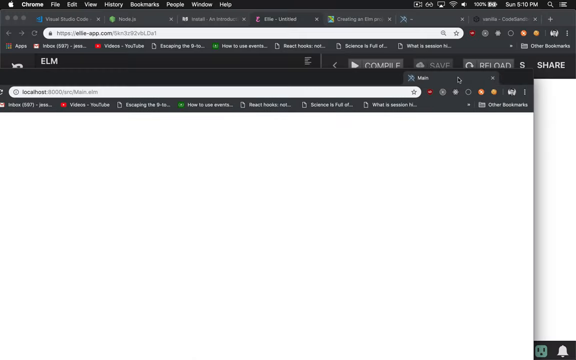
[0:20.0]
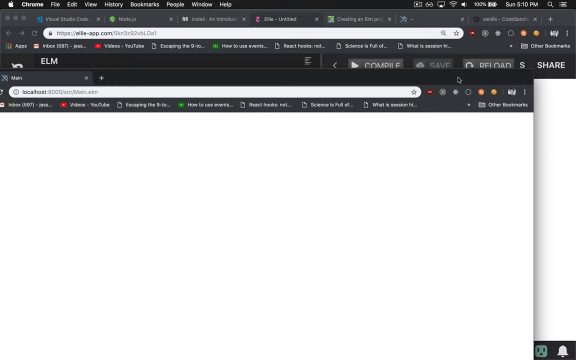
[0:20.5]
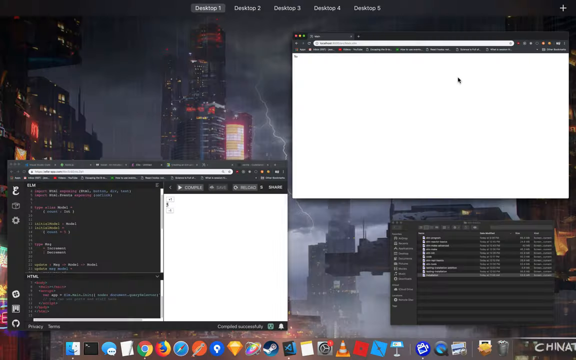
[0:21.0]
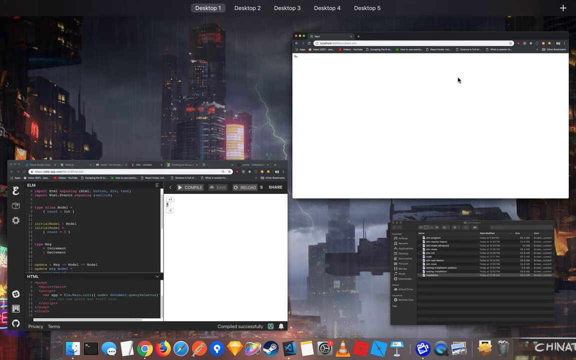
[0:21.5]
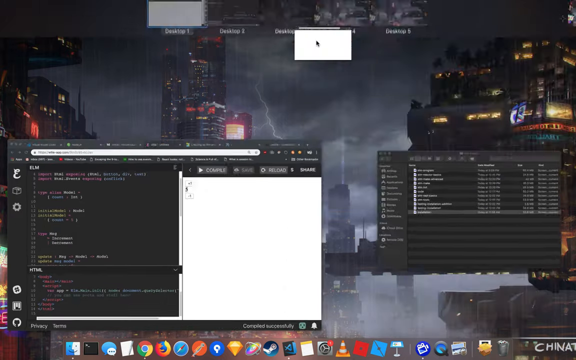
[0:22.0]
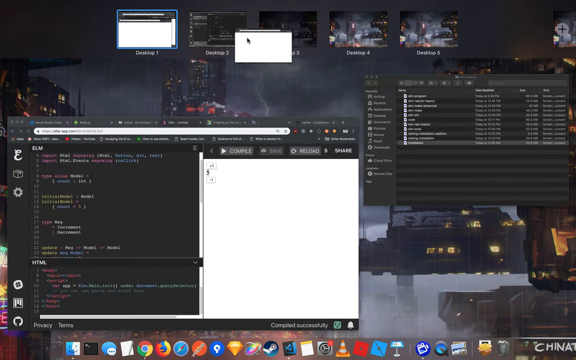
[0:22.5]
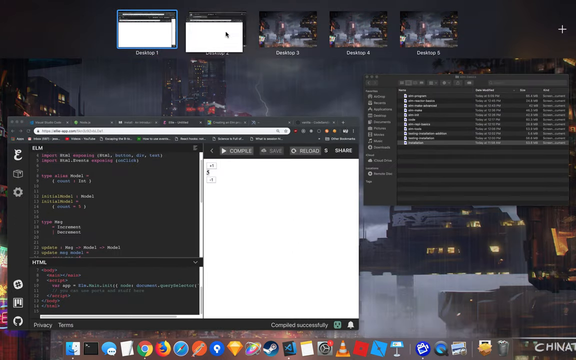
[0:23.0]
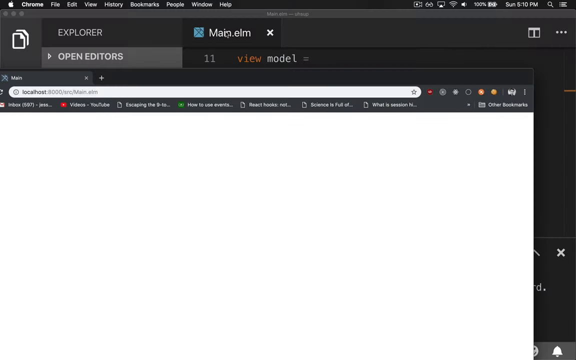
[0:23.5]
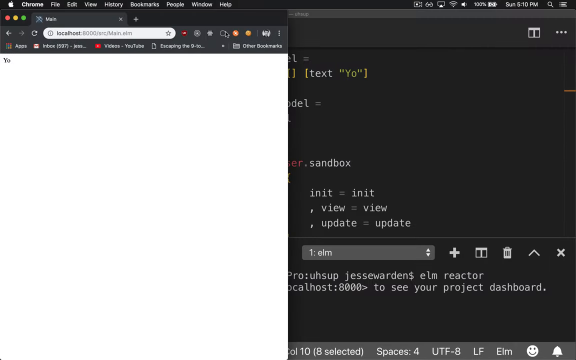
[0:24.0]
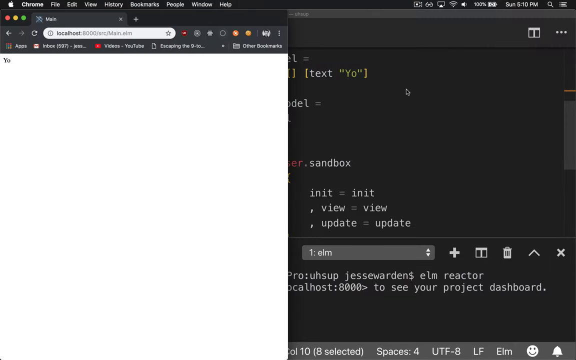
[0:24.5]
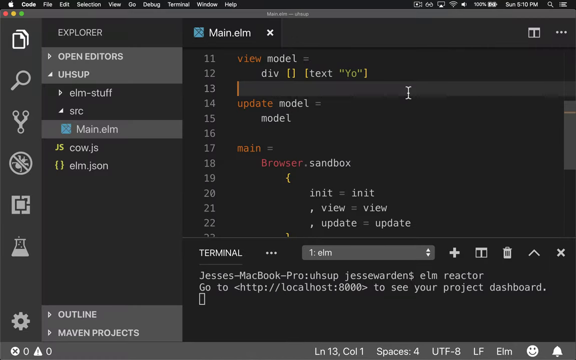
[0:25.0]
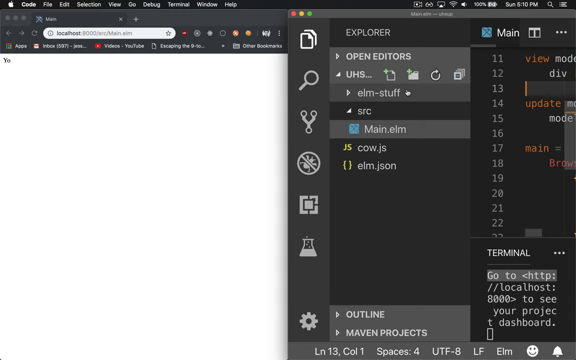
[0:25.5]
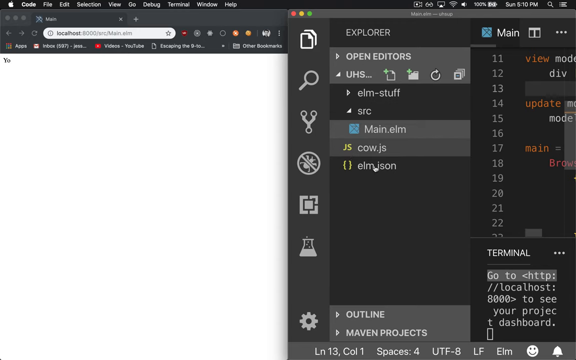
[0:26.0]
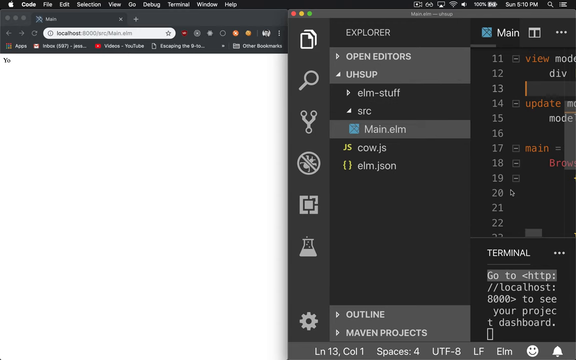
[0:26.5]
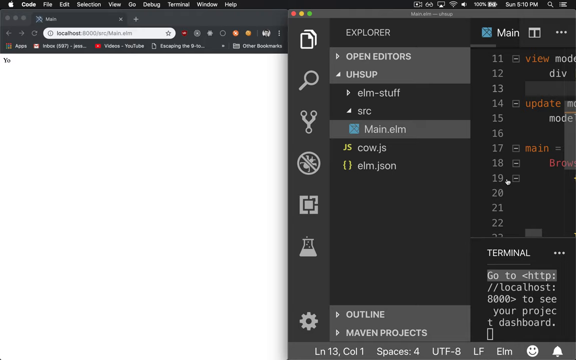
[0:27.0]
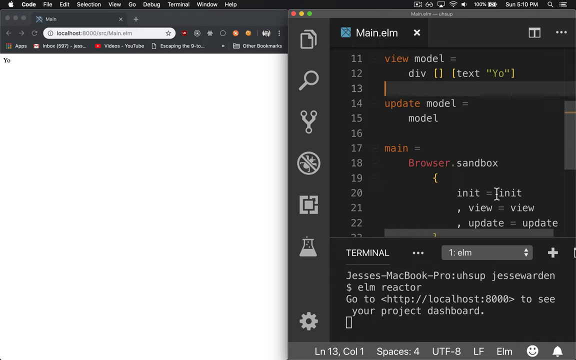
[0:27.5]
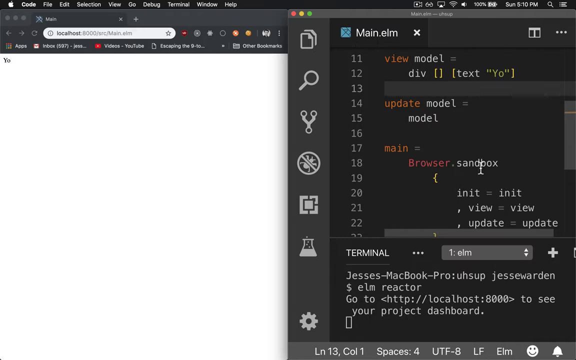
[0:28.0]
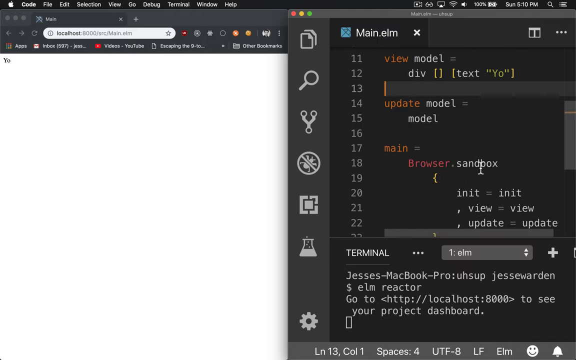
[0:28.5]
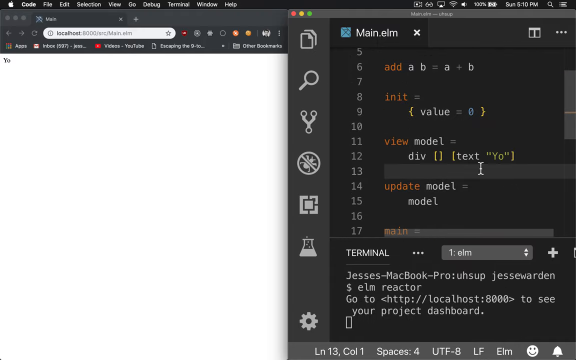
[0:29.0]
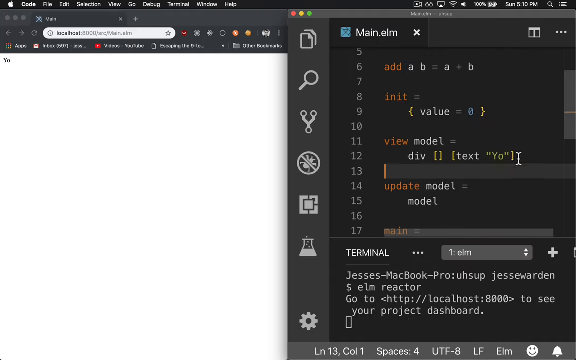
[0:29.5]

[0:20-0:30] The person shows the web browser next to the VS Code-like editor using a split-screen option in macOS, with the two windows side by side on the screen. They show AB equals A plus B, some initial values, a model, an update model method, information that says "Jessie's MacBook Pro", and localhost port 8000 open. They then show an app.com for Elm and show their application. No physical subjects appear.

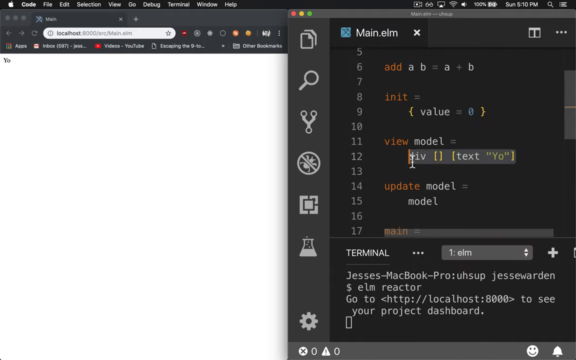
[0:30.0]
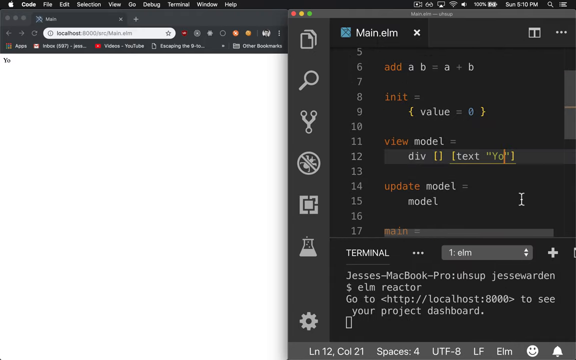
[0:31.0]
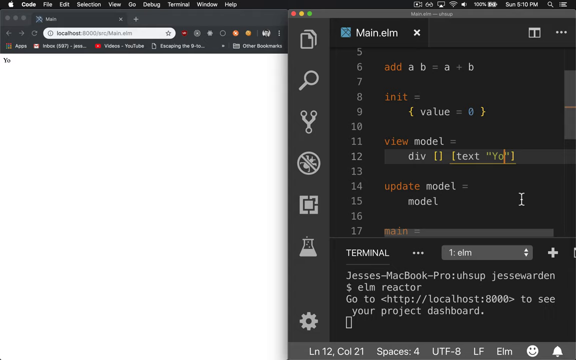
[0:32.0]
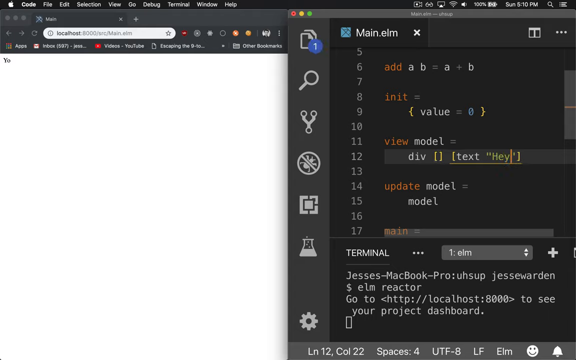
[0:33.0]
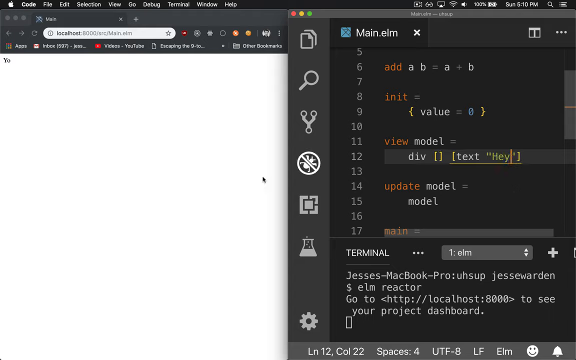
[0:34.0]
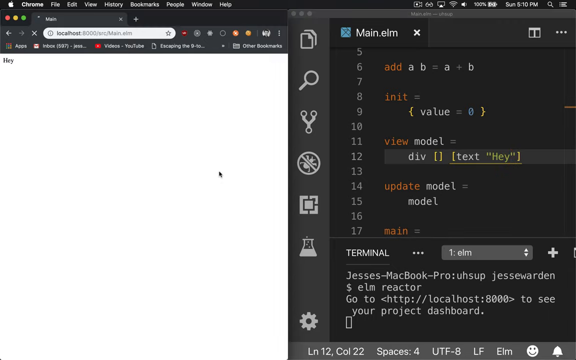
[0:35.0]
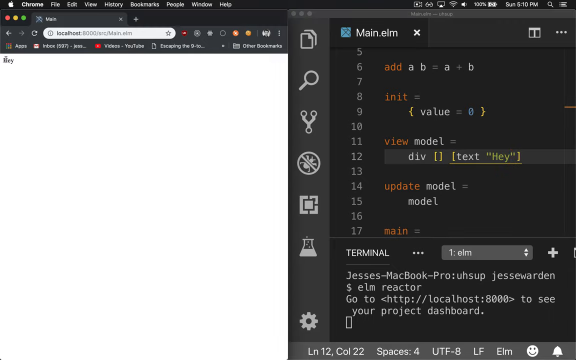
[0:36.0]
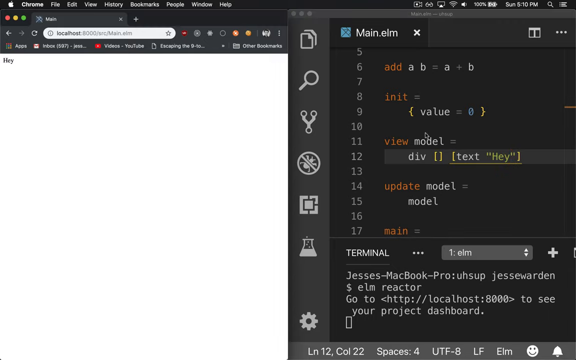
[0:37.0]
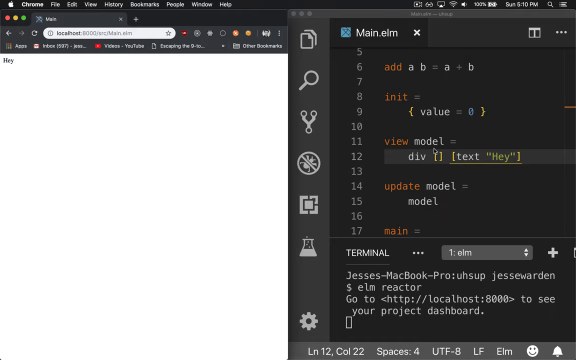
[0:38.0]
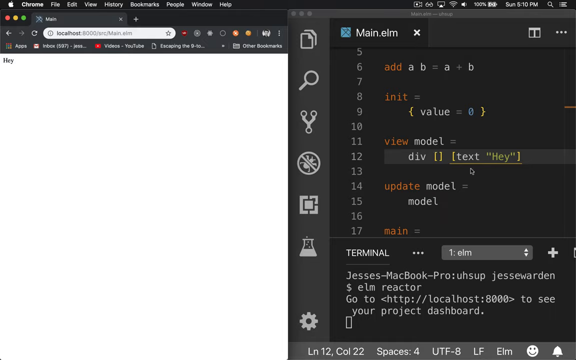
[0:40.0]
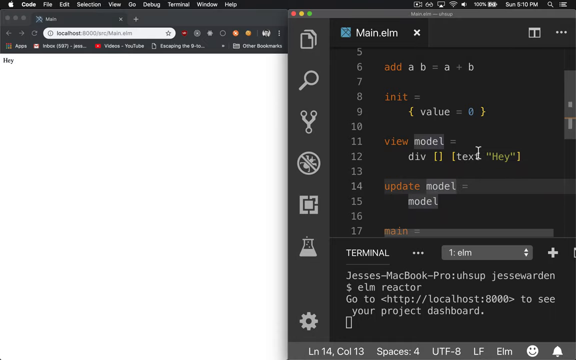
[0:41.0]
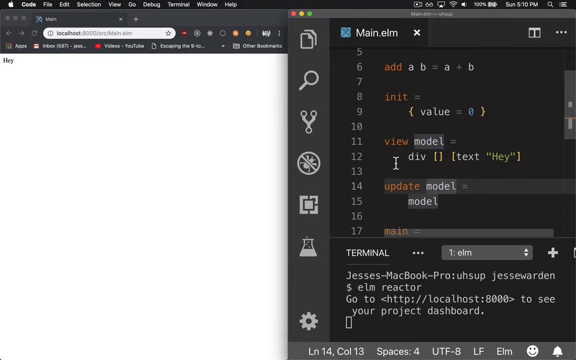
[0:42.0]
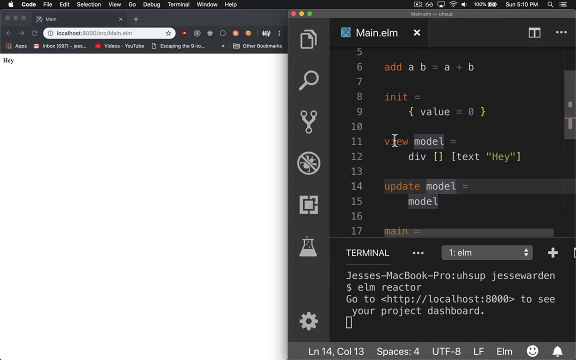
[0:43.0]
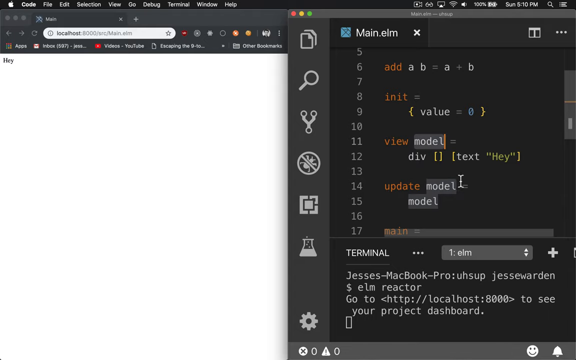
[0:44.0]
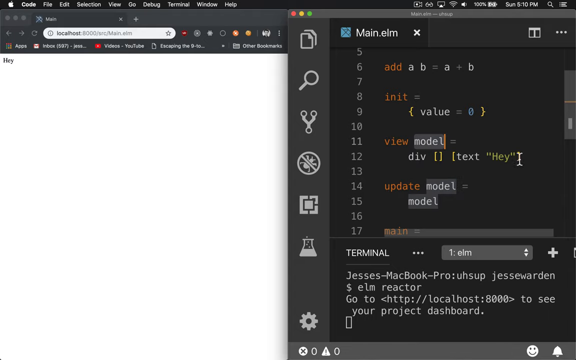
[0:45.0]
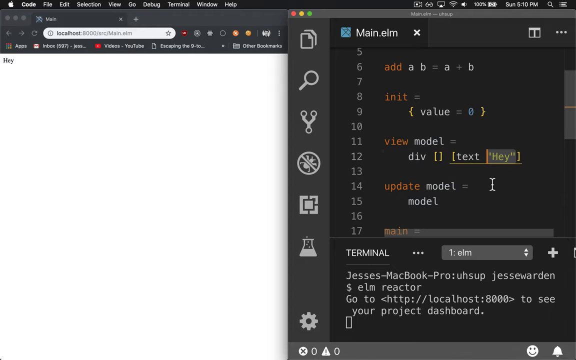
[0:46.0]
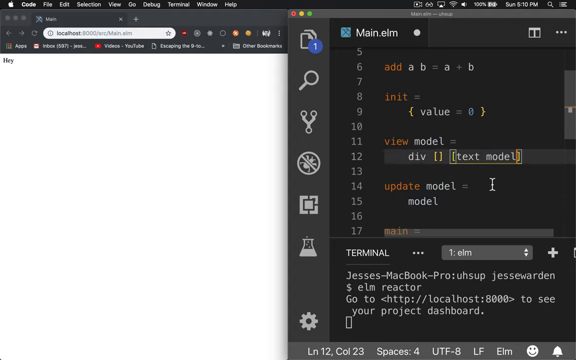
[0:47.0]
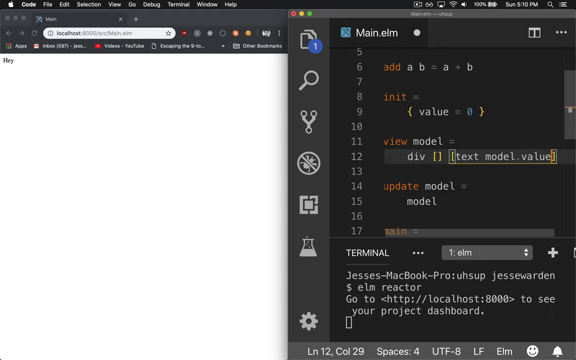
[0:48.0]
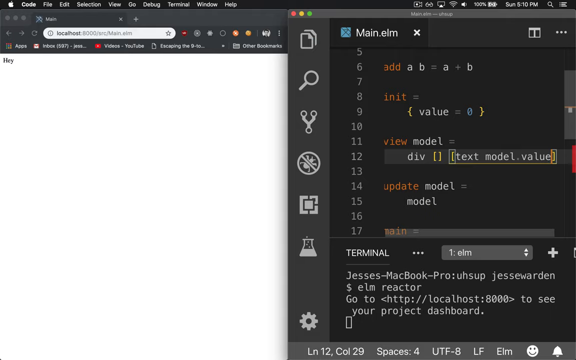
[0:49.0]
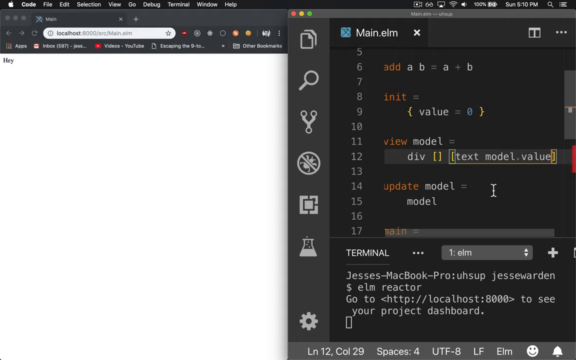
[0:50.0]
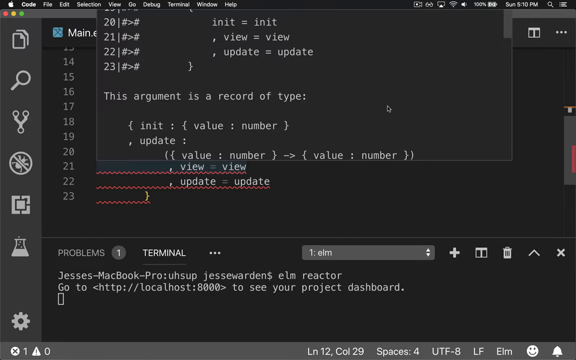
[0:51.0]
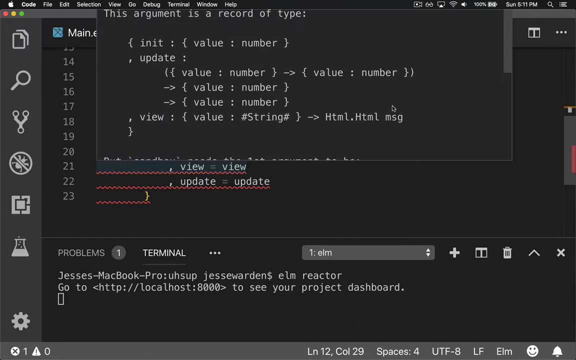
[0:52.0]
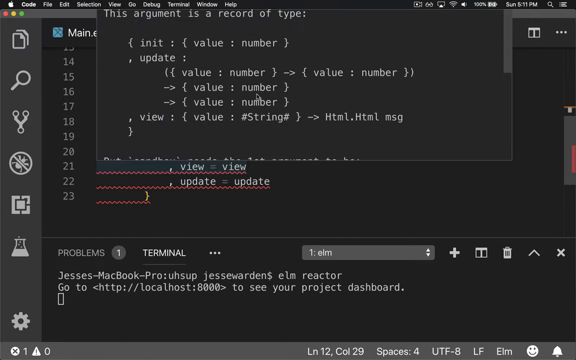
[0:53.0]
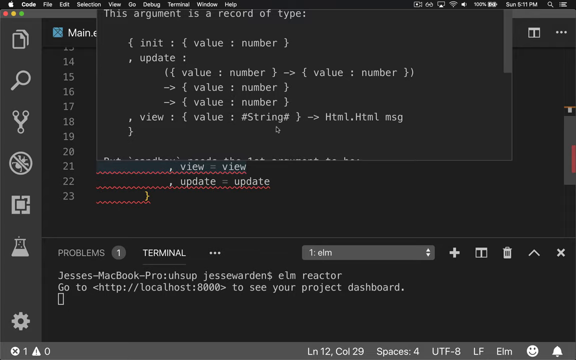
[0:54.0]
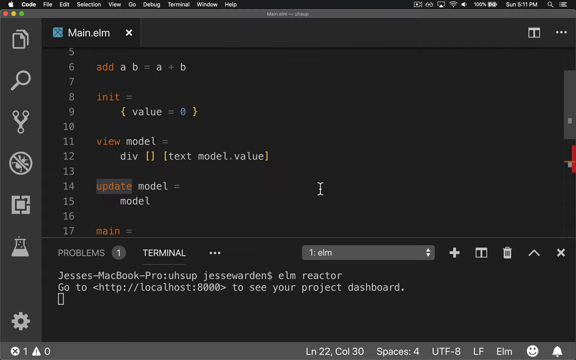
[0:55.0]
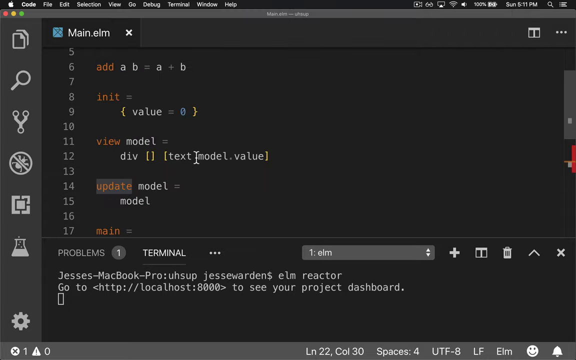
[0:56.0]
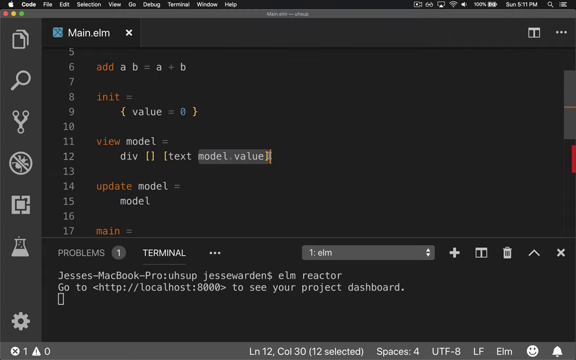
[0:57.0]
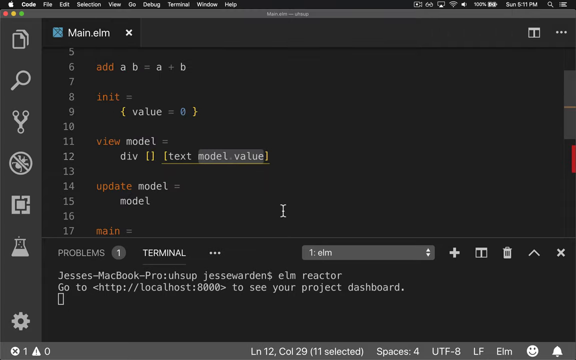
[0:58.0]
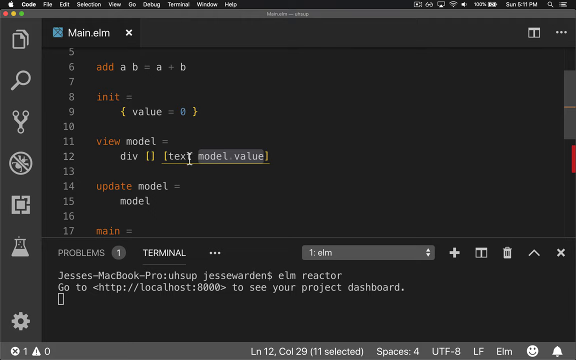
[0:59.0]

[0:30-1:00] The person uses the view model div to write new text inside it, and the new text, "hey", is visible on the localhost port 8000 page open in their web browser, showing the model changes loaded onto the page. The person then changes the text model.value option and shows some code related to the model value. Information about an argument, record types and an error shown in their IDE appears. They hover over a few values related to the browser.sandbox error and the initialized value, and then hover over text model.value. No physical people or subjects are visible; the setting is the web browser and the code editor.